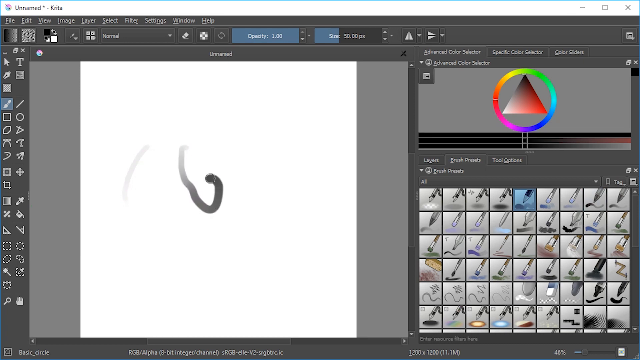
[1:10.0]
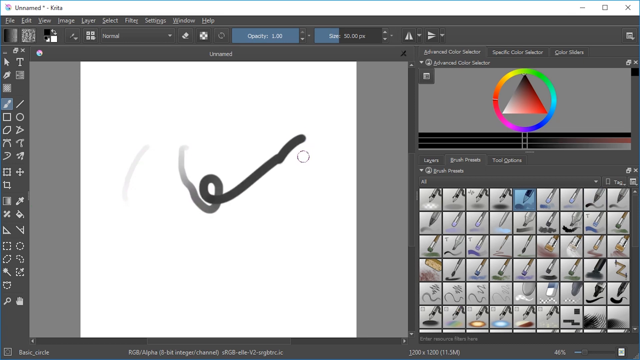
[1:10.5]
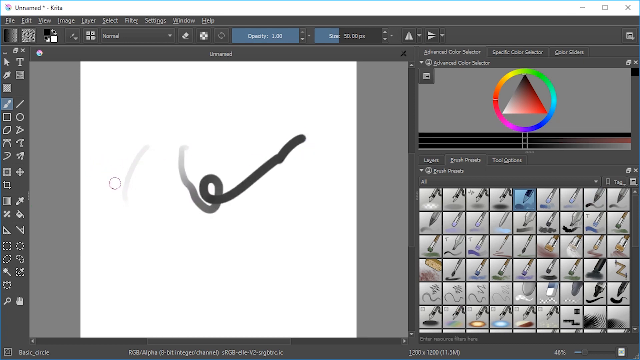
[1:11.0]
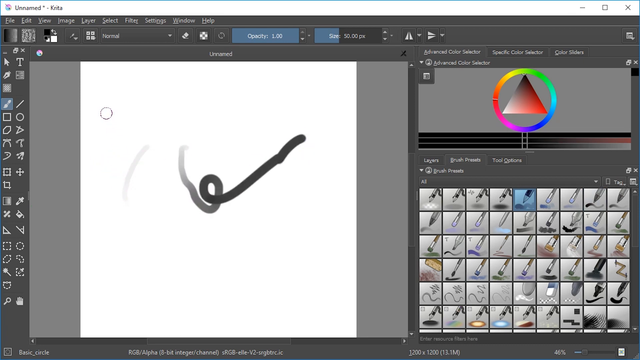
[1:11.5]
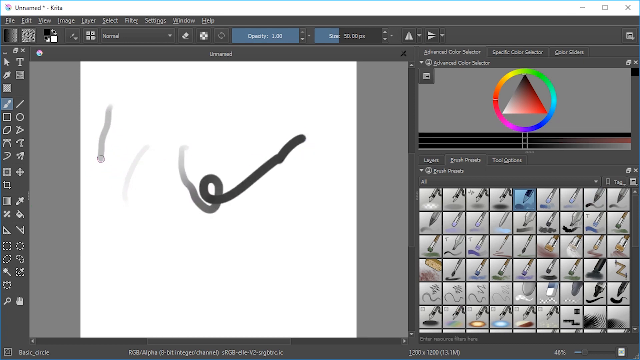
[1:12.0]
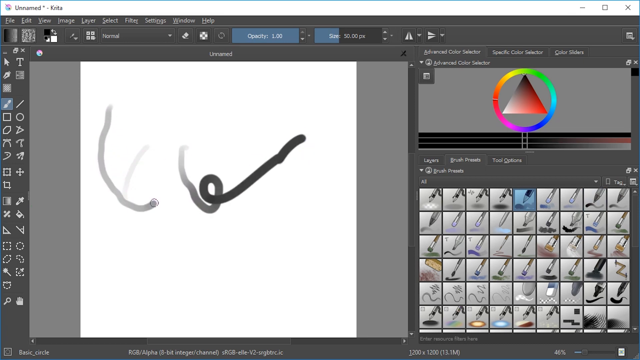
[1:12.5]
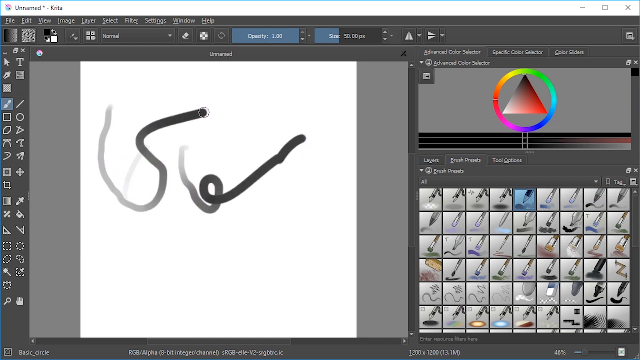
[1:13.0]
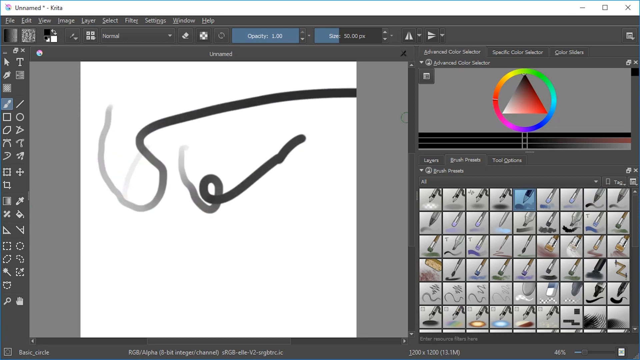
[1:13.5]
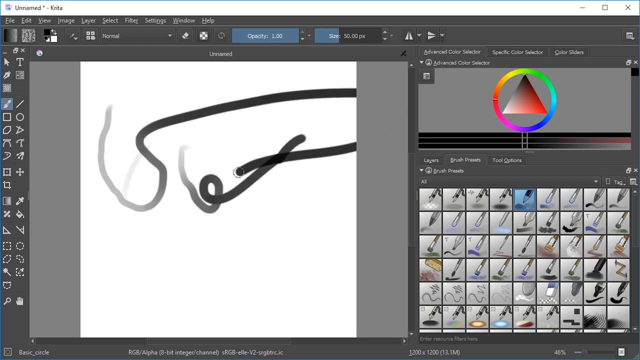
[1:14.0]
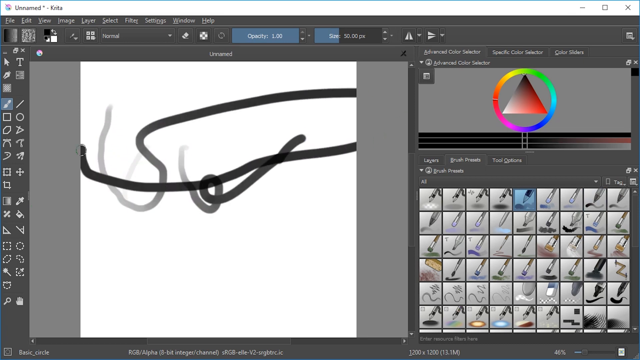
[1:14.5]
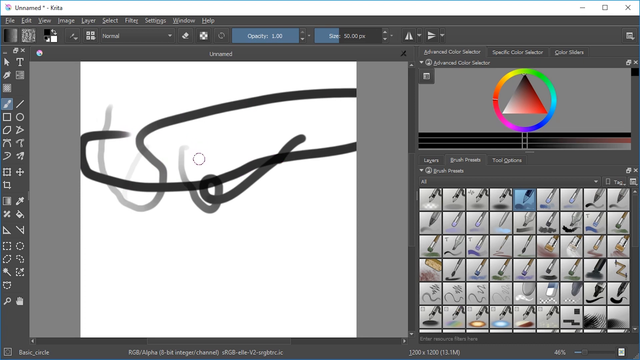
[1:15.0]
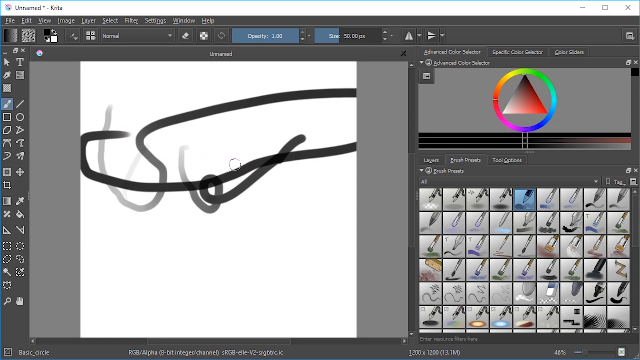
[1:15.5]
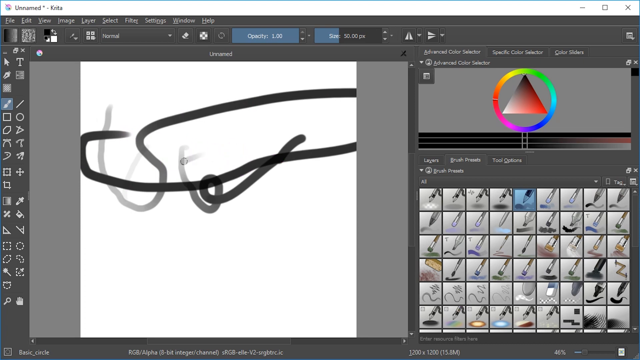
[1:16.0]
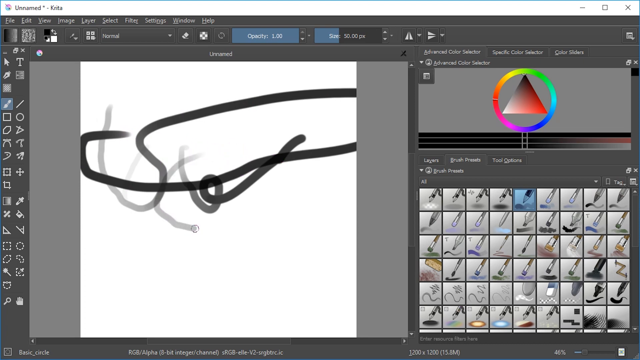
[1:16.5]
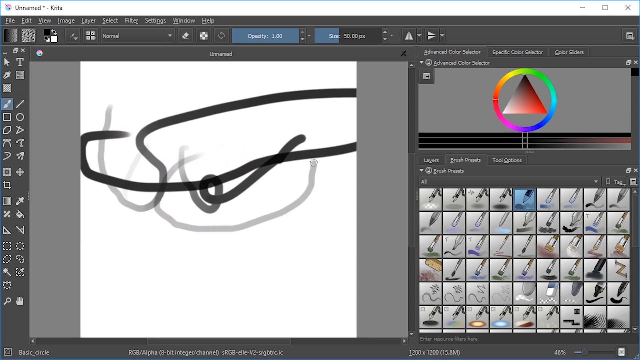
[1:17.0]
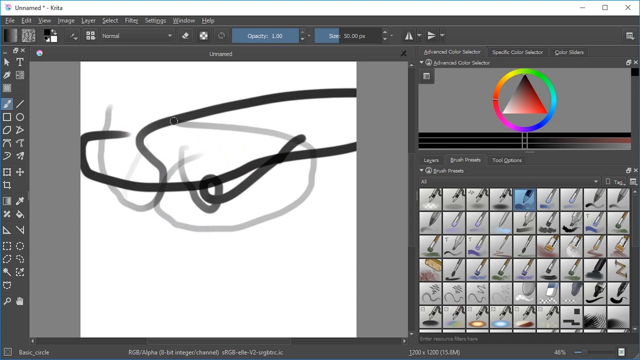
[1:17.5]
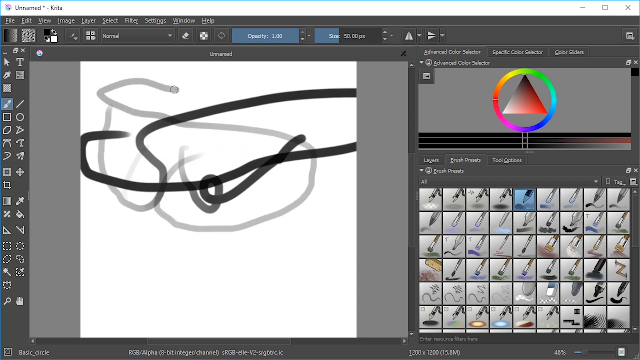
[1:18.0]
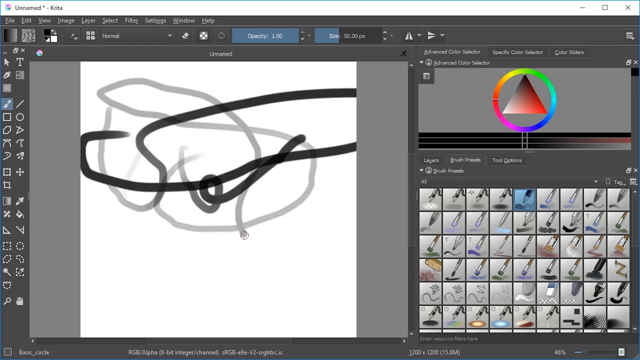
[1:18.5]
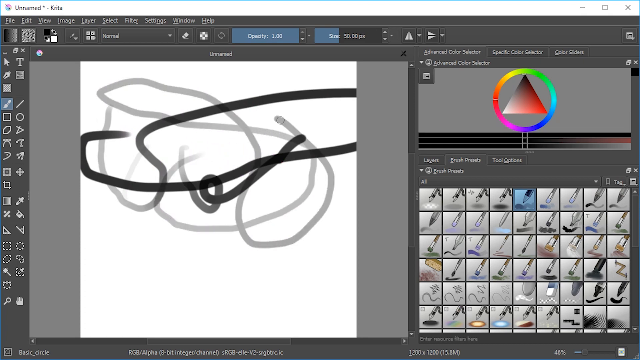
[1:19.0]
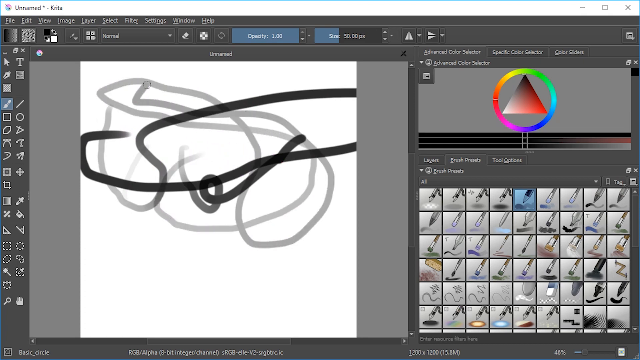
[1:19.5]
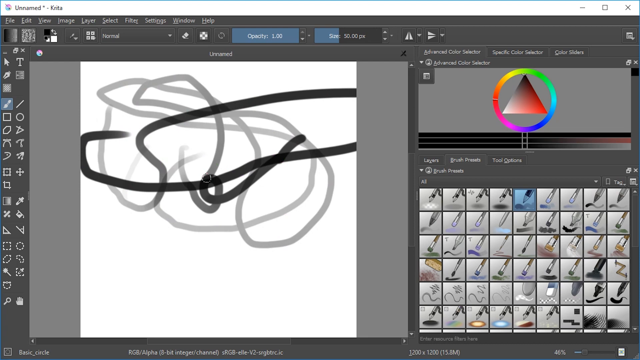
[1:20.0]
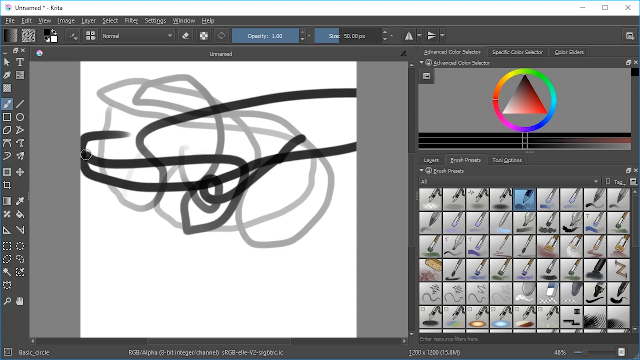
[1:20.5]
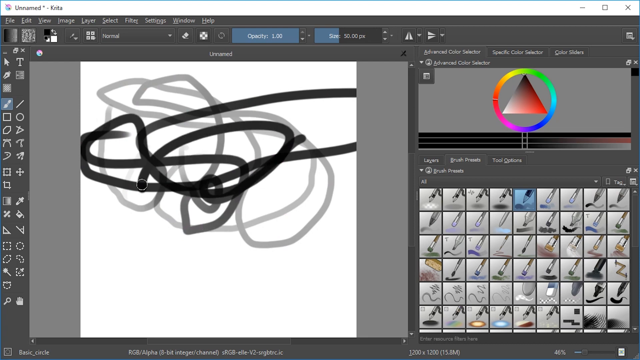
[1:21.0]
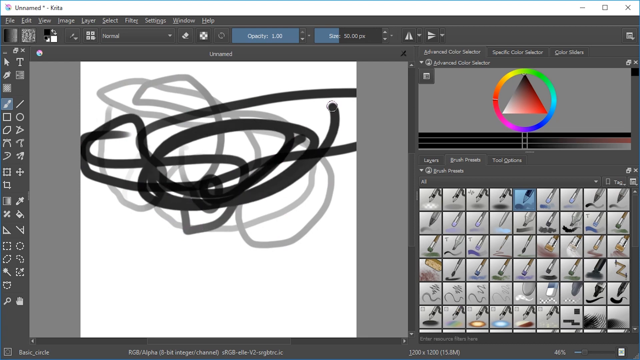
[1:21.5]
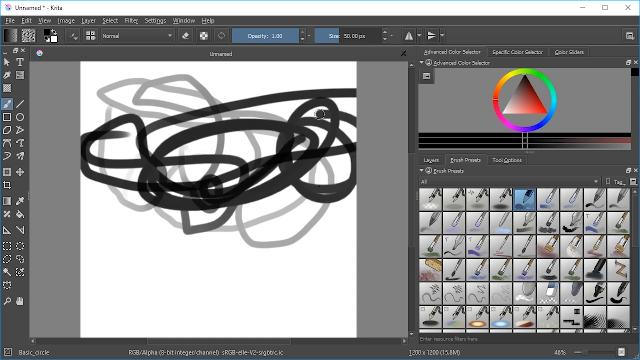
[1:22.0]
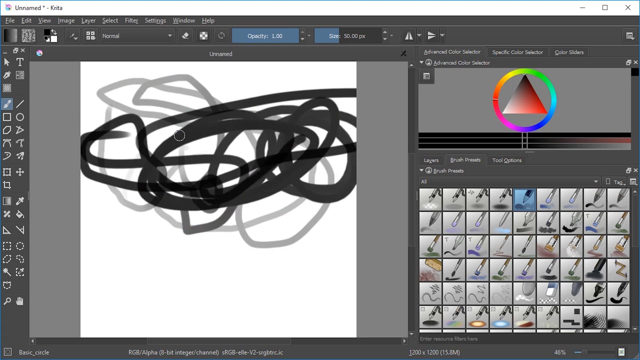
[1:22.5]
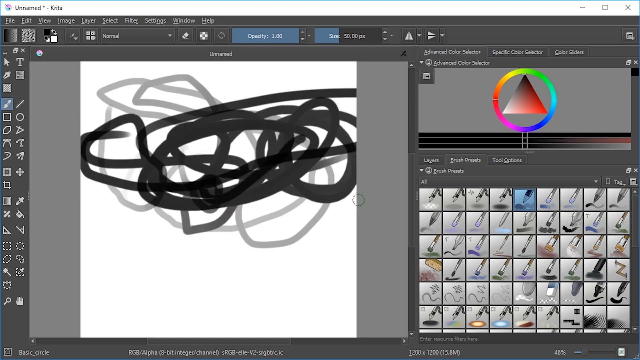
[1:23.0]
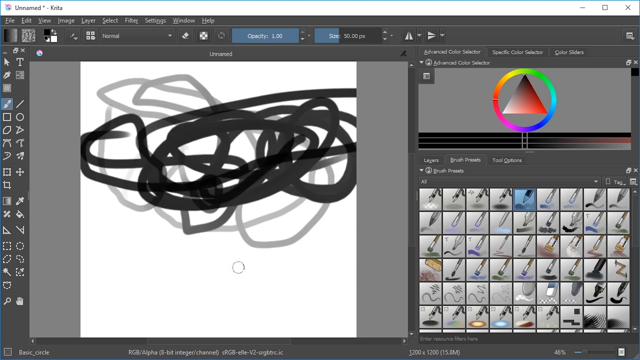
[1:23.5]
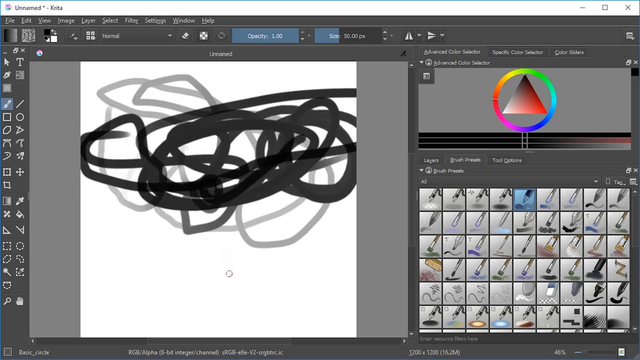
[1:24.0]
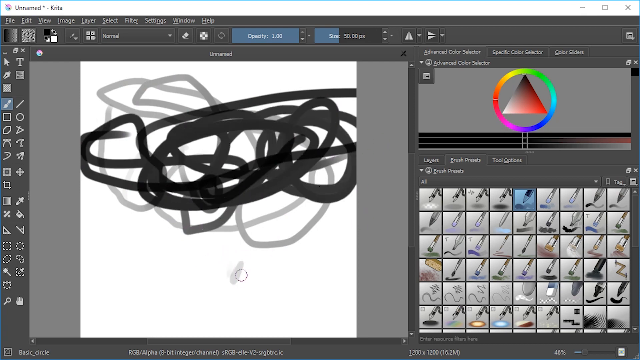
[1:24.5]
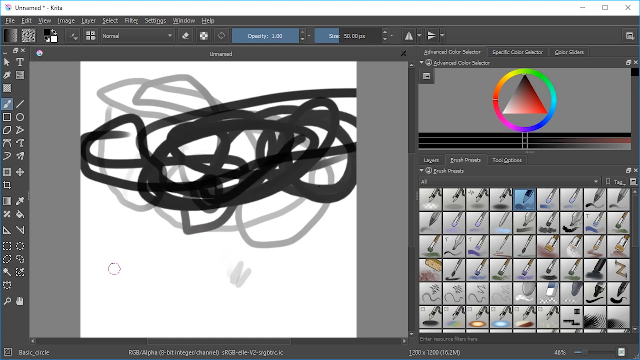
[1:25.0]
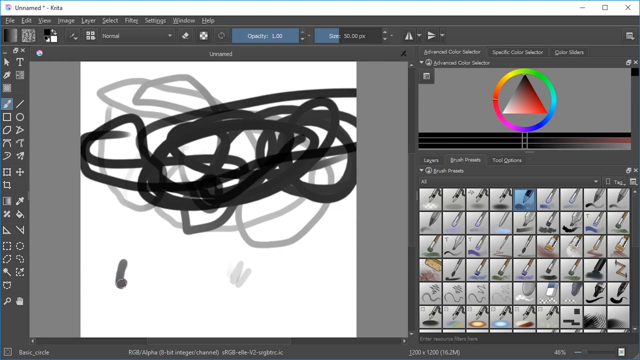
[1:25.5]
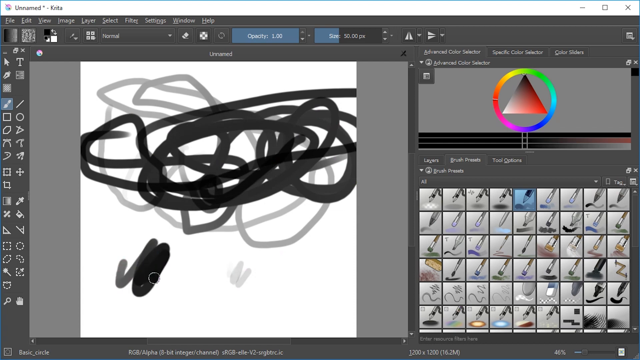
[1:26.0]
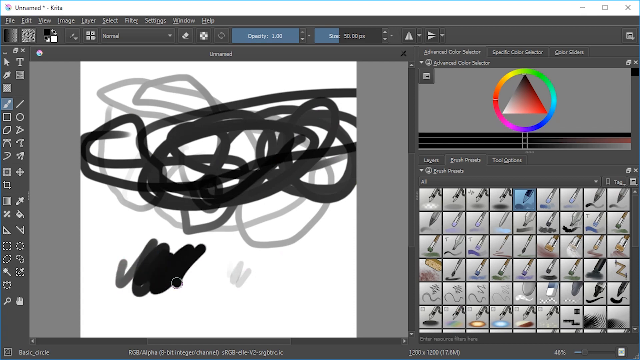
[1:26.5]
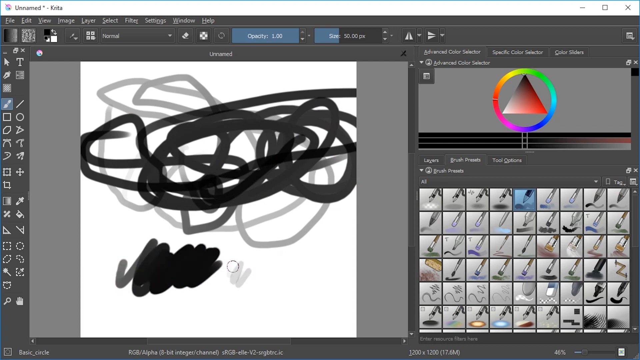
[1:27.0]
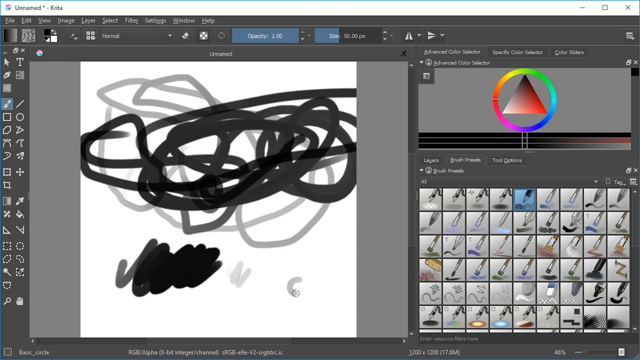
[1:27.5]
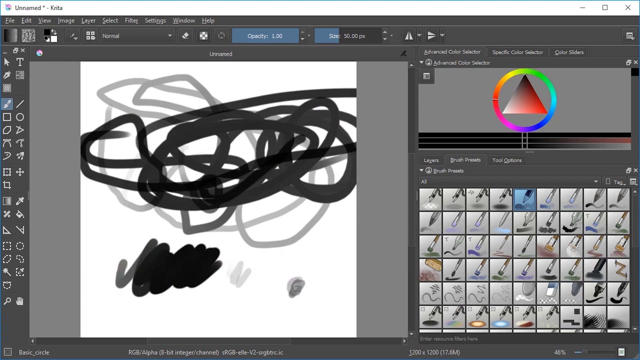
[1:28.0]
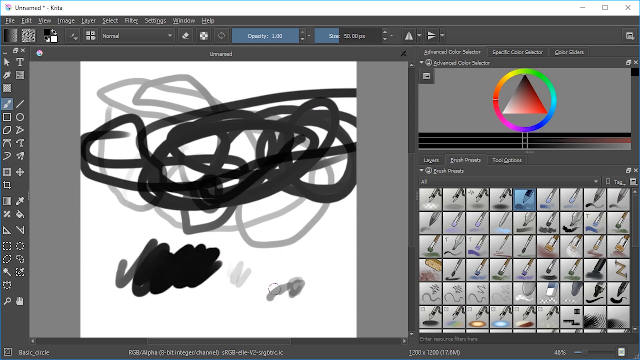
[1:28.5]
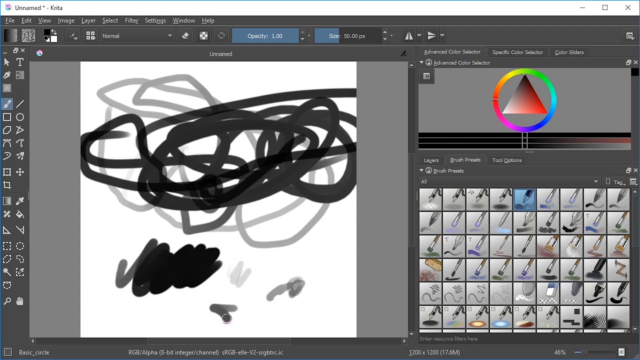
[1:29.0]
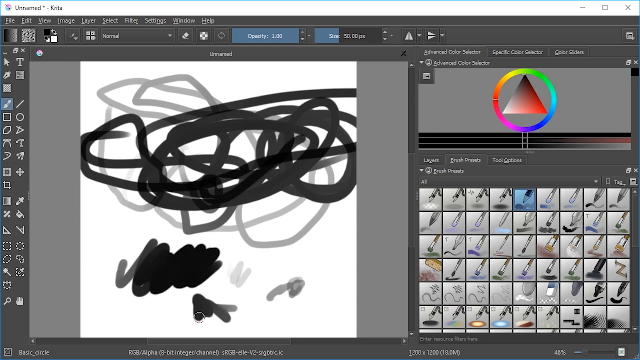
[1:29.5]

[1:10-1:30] The tablet screen shows the two lines made before, and the second line continues, darkening and making some curls. Other lines are drawn: the first is dark, then it goes back to light gray, then fades back to black, and it scribbles all over the page. Nothing visibly triggers the changes, so the pen's color, and probably its translucency, seem to change by keystroke. The lines range from light gray up to dark gray, there is heavy scribbling in the middle, and in the lower part of the screen dots are added instead of just lines. At the bottom there is a large blob along with several small white dots, followed by a larger blob.